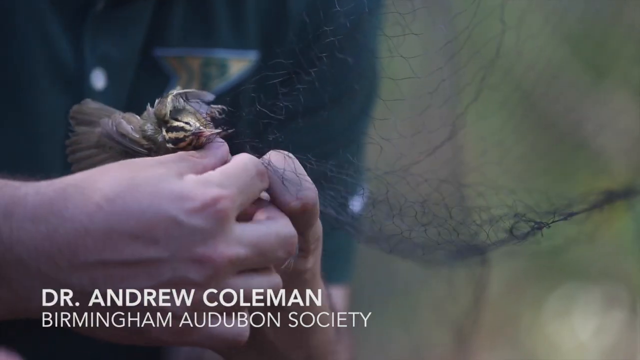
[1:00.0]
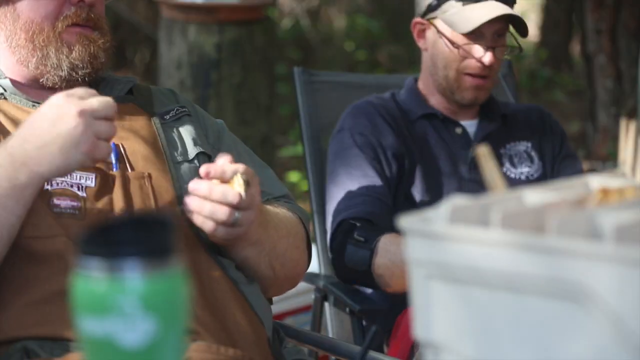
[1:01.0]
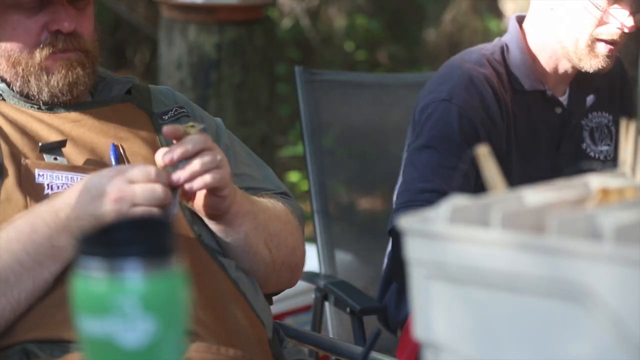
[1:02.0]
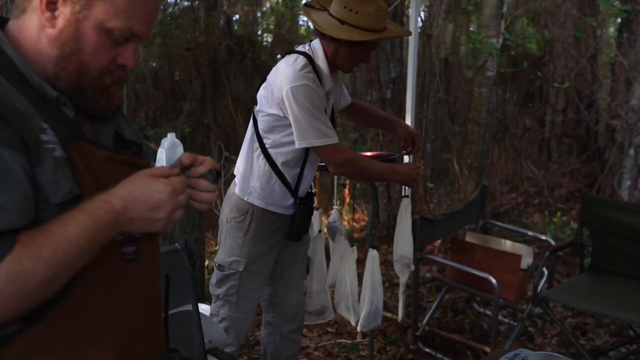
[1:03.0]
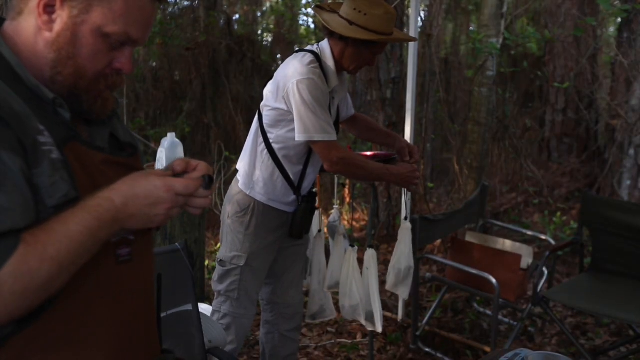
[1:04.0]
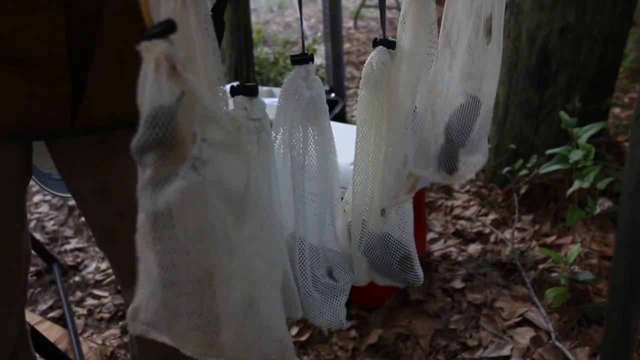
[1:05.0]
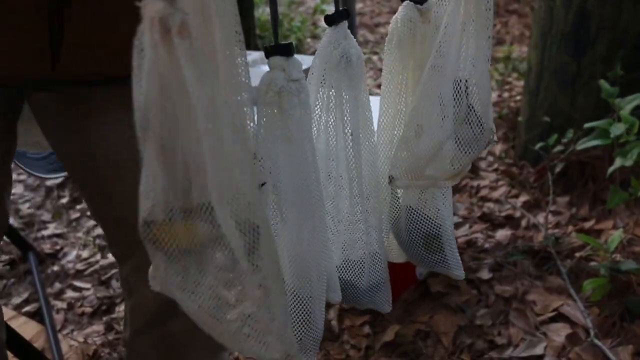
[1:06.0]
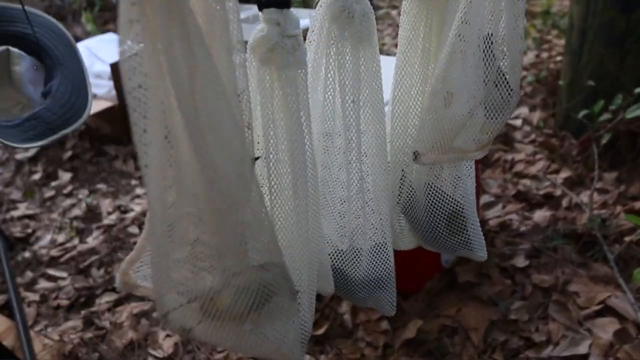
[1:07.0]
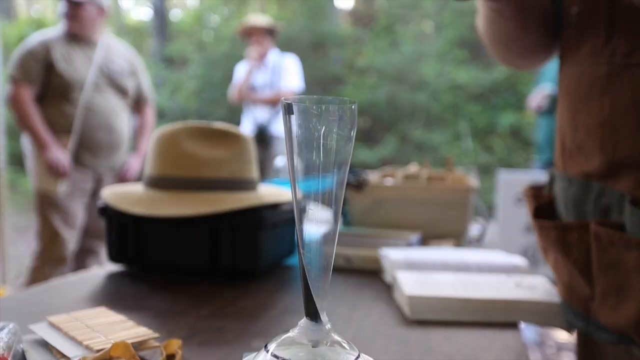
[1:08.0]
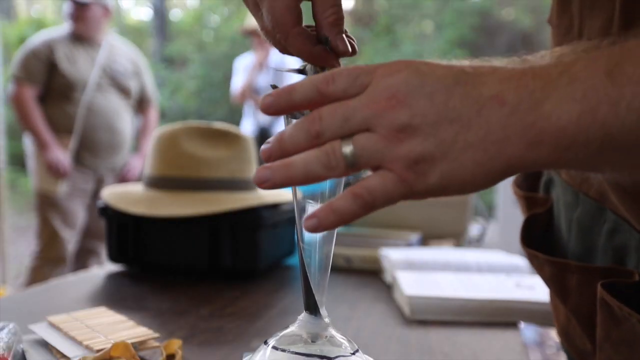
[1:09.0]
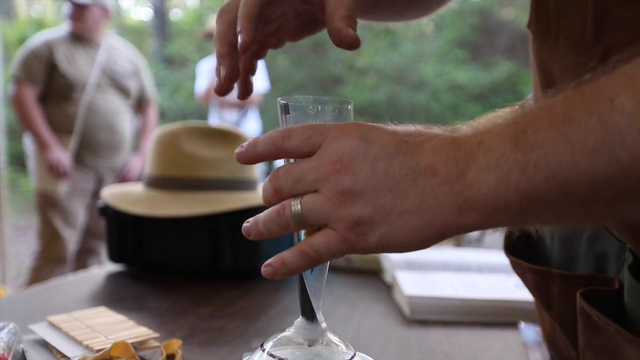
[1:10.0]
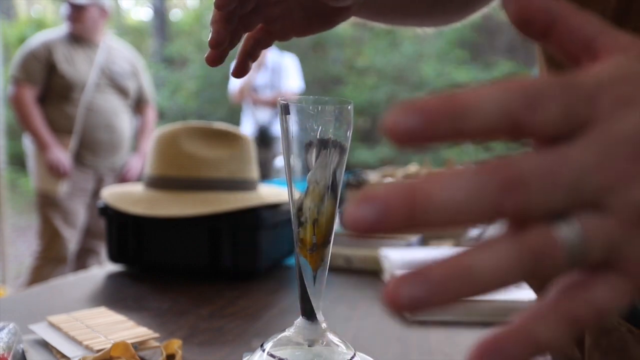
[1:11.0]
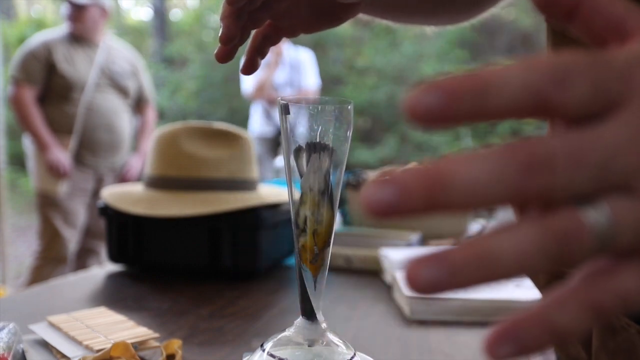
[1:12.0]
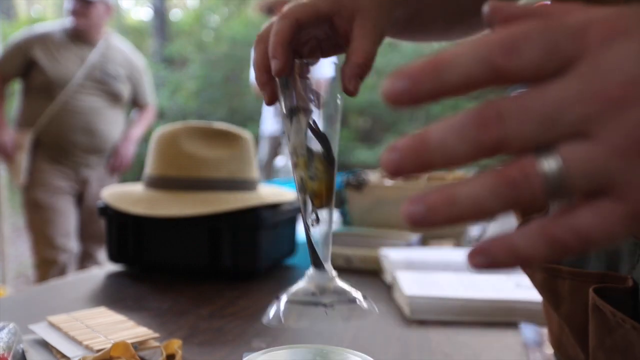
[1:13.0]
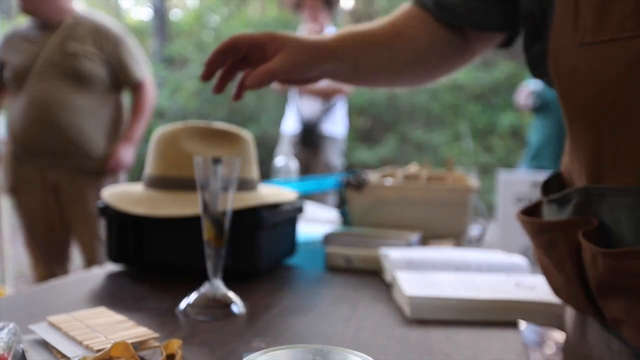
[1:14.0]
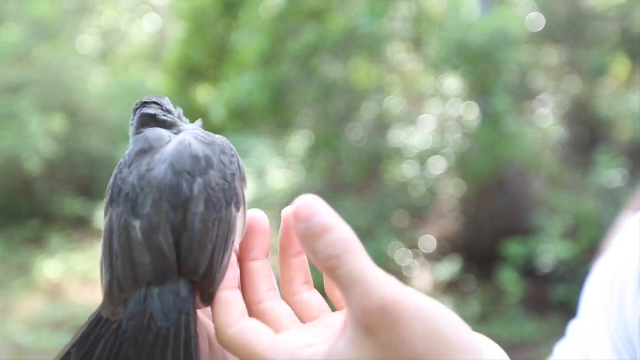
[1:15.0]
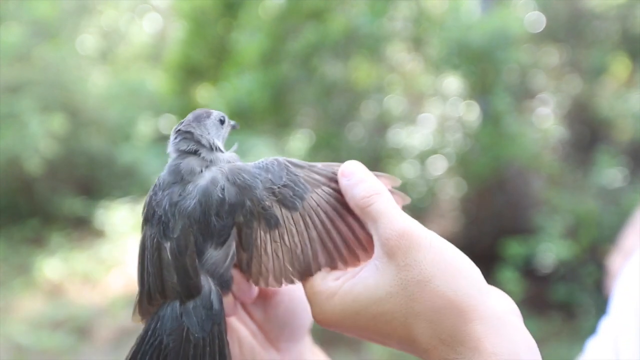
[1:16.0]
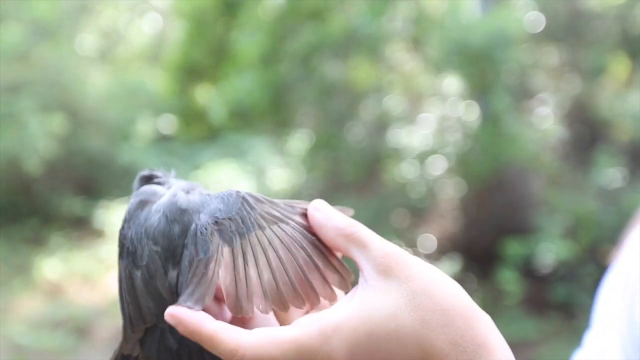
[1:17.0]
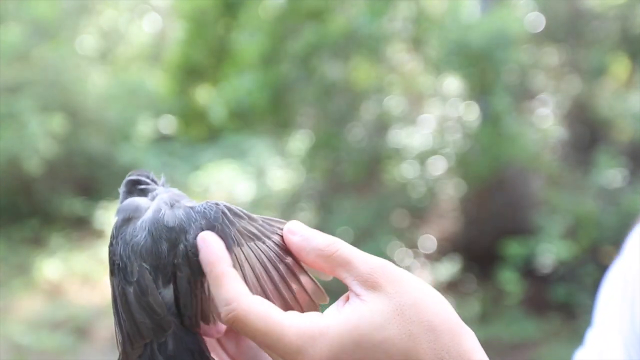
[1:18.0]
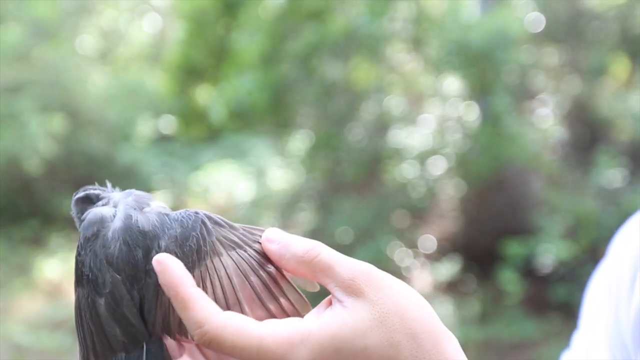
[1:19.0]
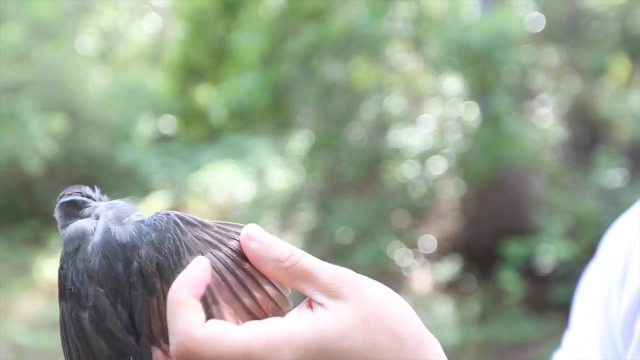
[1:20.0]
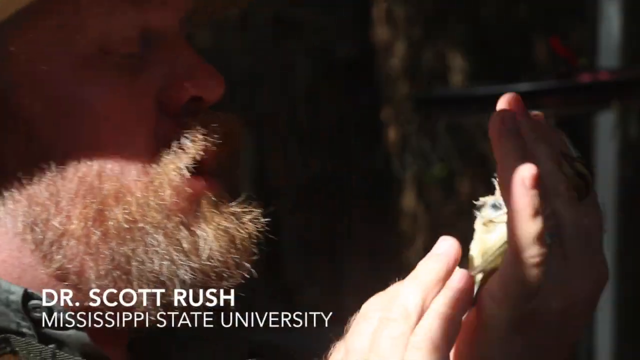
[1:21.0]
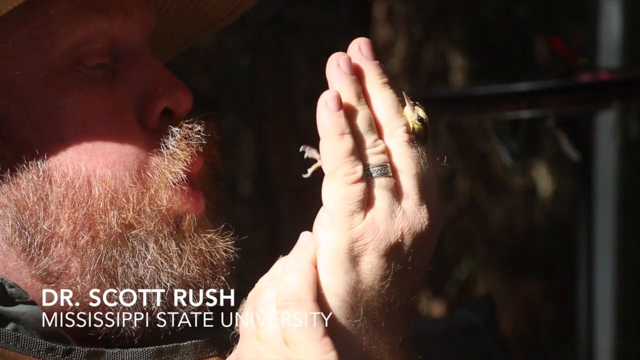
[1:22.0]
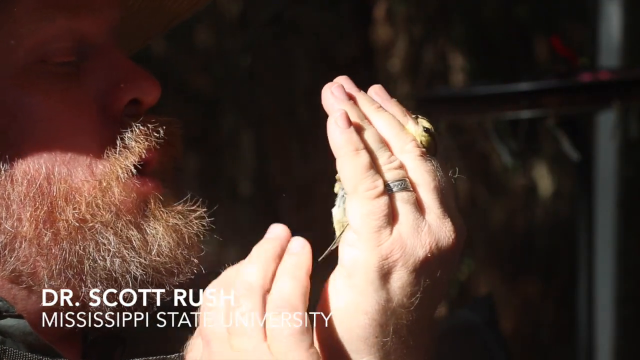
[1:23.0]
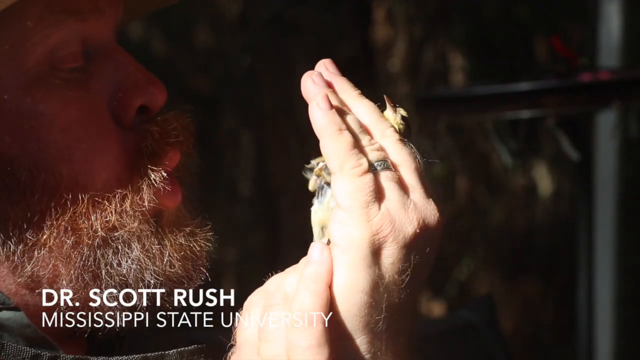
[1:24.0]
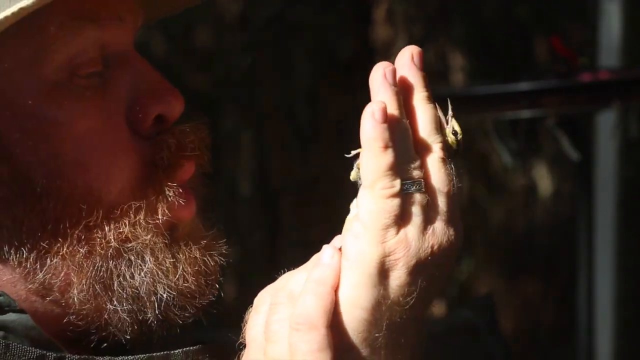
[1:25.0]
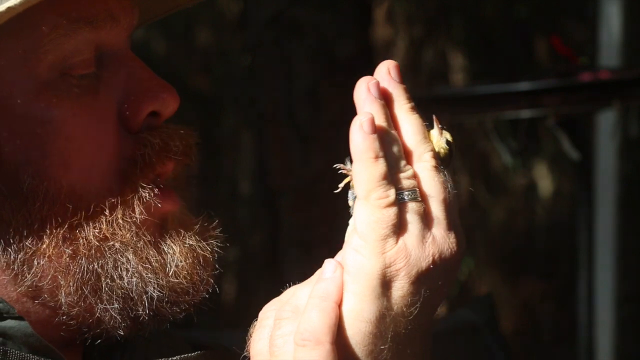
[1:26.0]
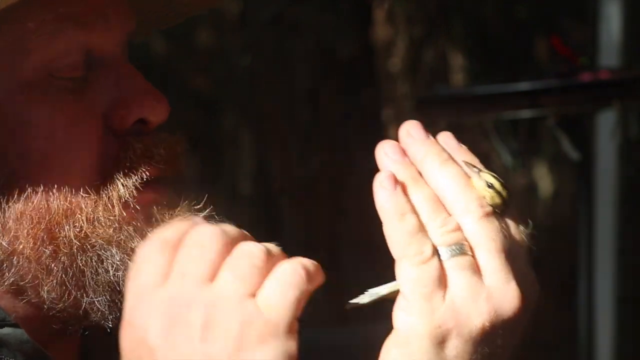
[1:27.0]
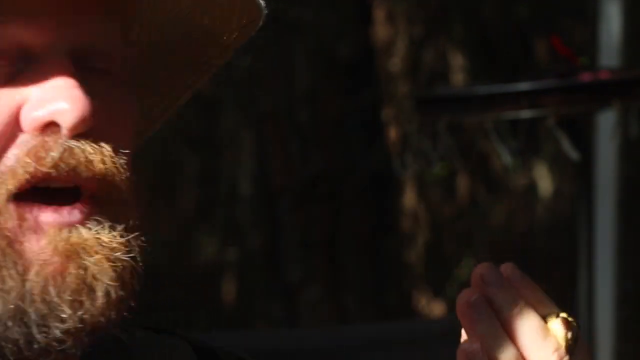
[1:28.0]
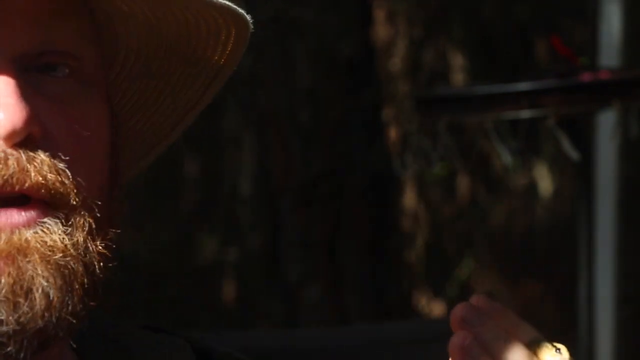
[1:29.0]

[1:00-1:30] Two people work in a laboratory. Dr. Scott holds a bird in his hand and keeps blowing on its feathers. Dr. Cohen is blowing on what is more of a baby bird in the hand.